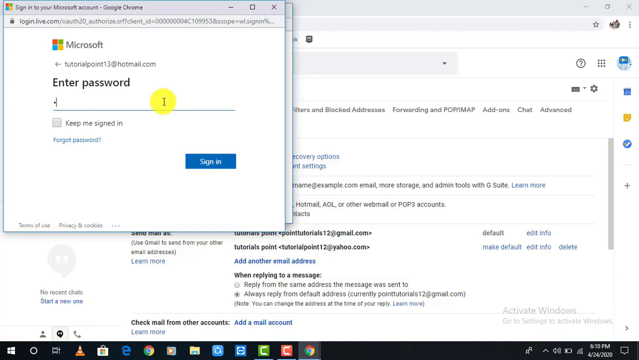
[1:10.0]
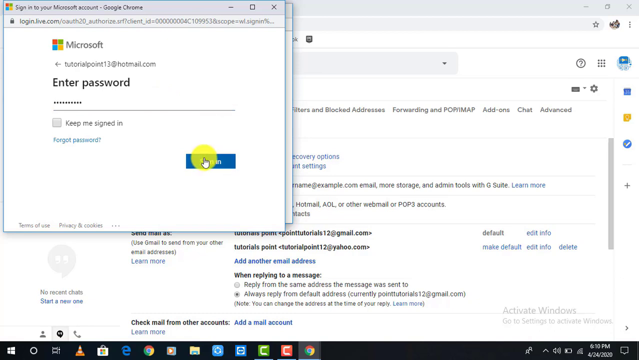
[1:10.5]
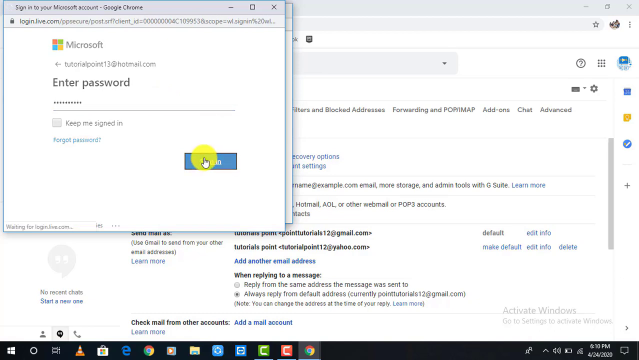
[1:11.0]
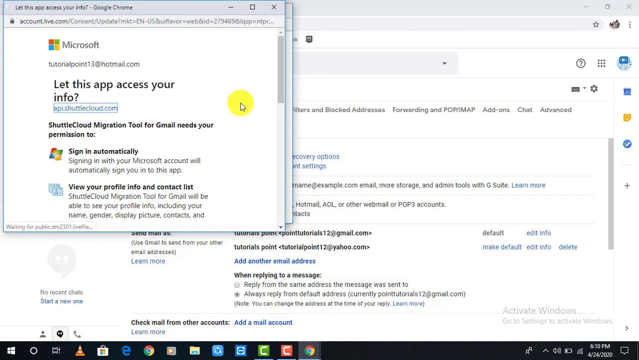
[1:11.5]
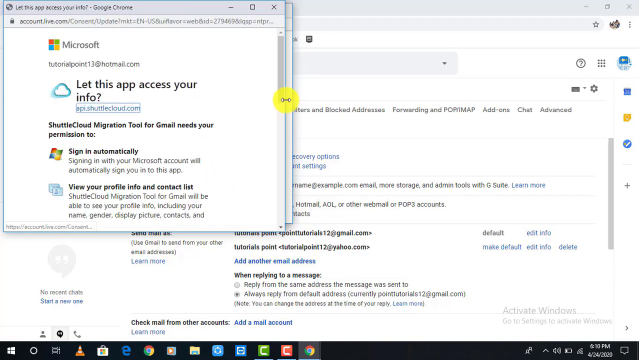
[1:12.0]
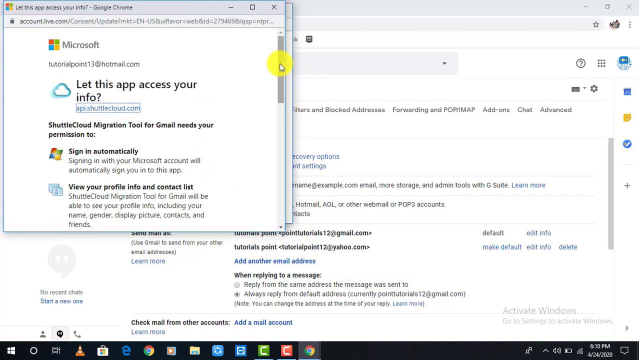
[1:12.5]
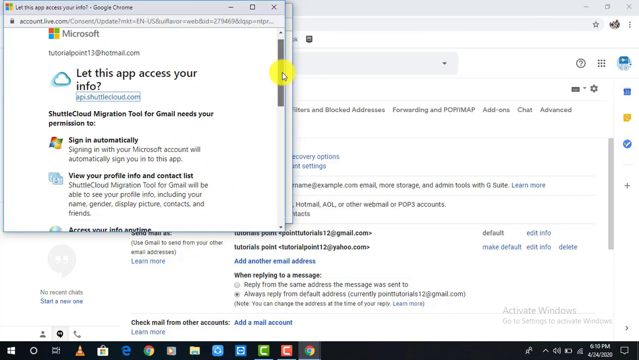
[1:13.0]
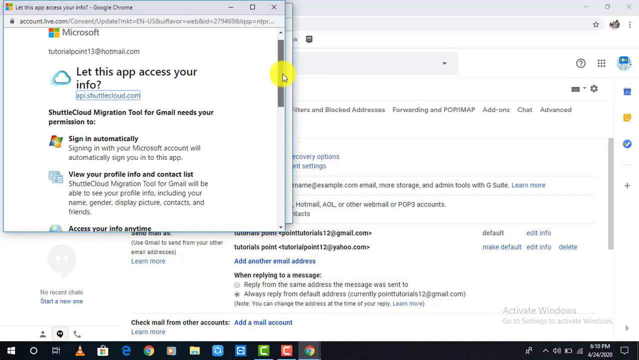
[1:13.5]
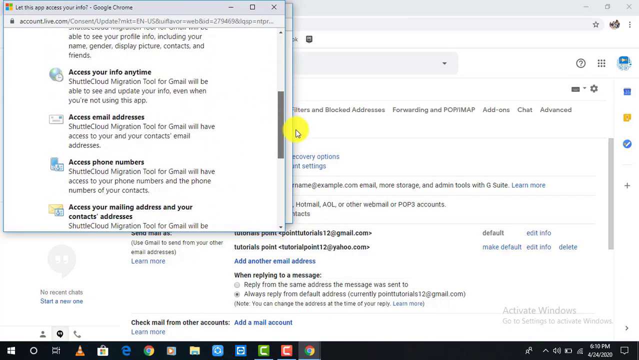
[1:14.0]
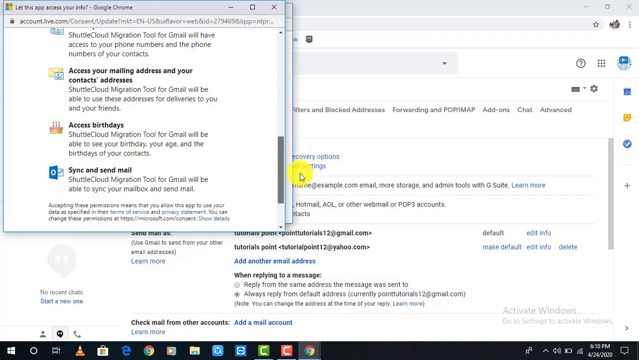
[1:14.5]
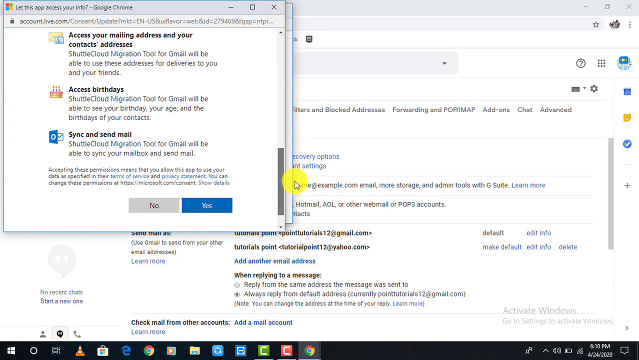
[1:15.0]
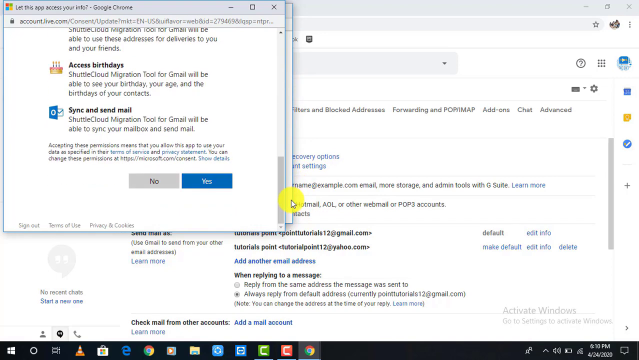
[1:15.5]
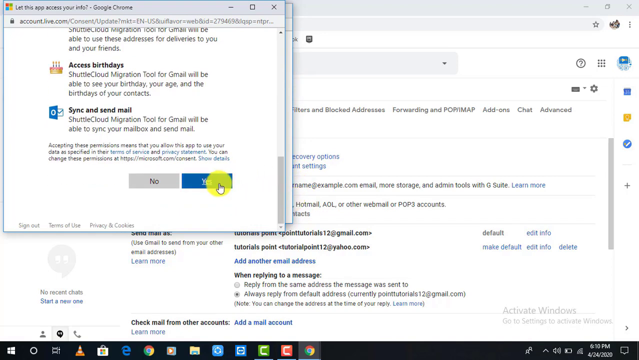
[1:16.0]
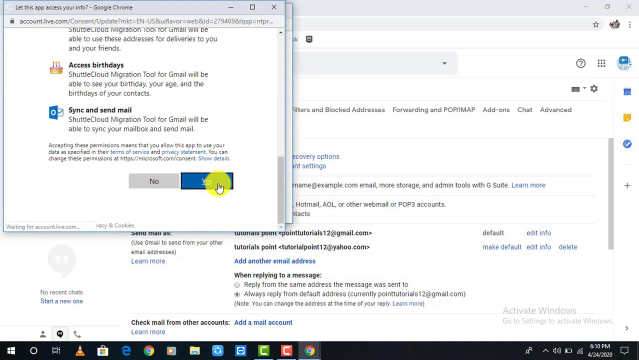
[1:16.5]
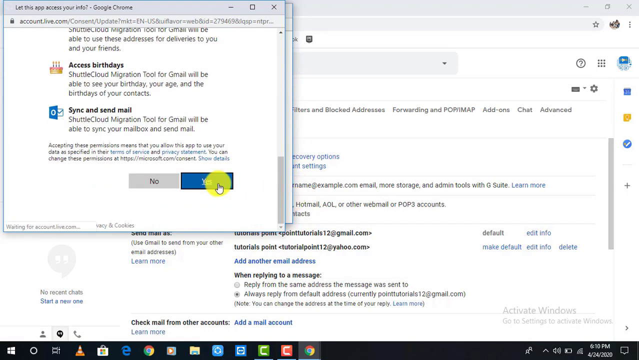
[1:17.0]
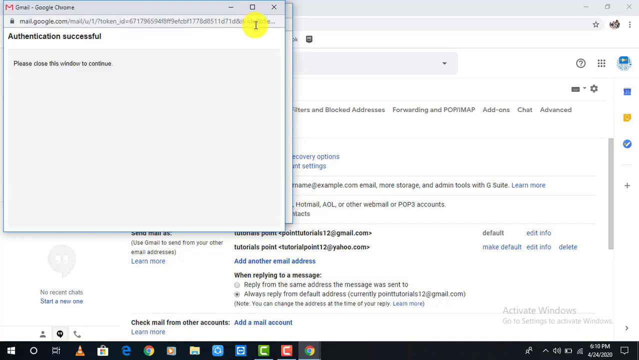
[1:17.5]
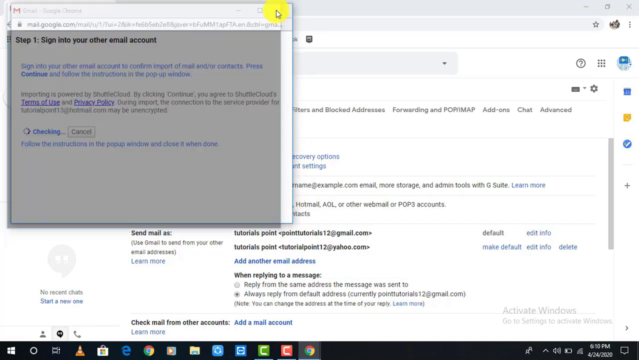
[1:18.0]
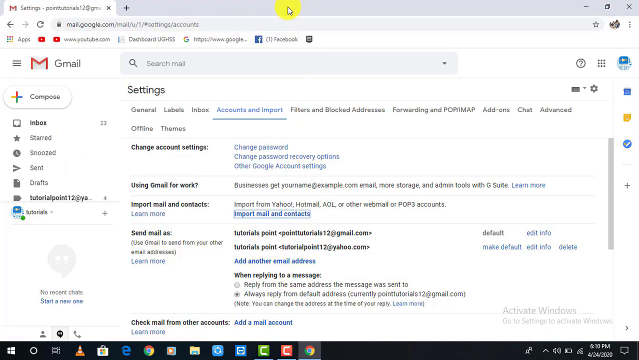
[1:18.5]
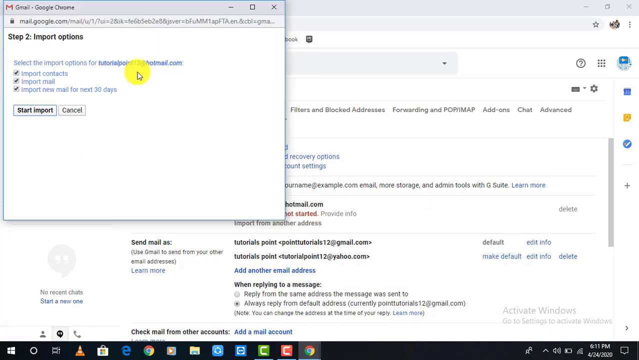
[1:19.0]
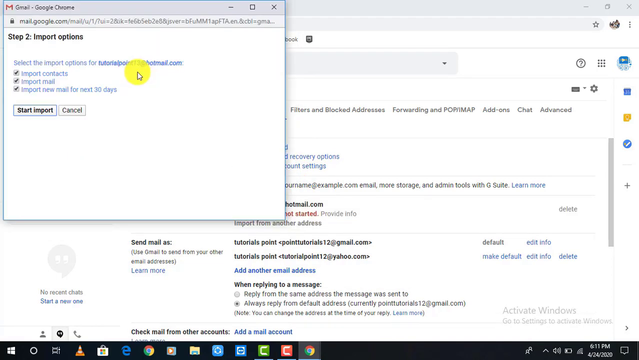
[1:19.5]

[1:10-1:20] The password has just been entered on the Microsoft pop-up and shows only as black circles. The user clicks a blue next button, and a different Microsoft pop-up appears with the email tutorial.13 at hotmail.com at the top. There is a cloud and the text "let this app access your info," followed by "shuttle cloud migration tool for Gmail needs your permission to sign in automatically, view your profile info and contact list." A small bar indicates more information to be shown; the user clicks it and scrolls to the bottom, where the list continues with items such as sync and send email, access birthdays, and access your mailing address and your contact address. Yes and no buttons are at the bottom, and the user clicks yes. Something then appears, and the user clicks X to exit the pop-up.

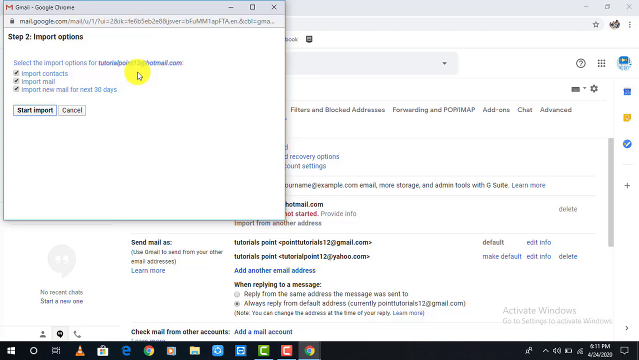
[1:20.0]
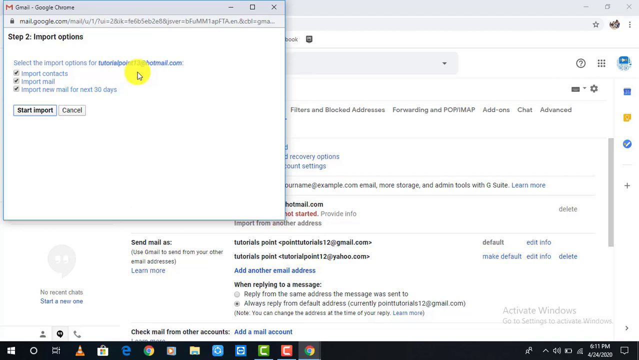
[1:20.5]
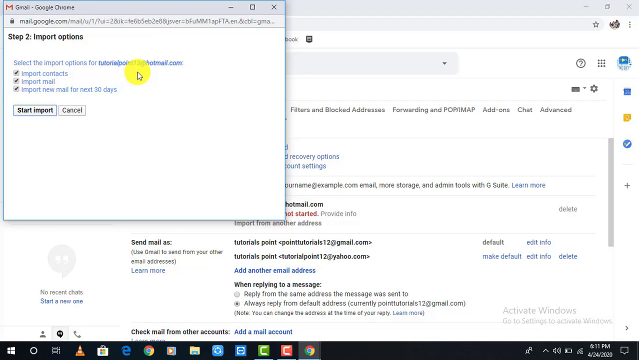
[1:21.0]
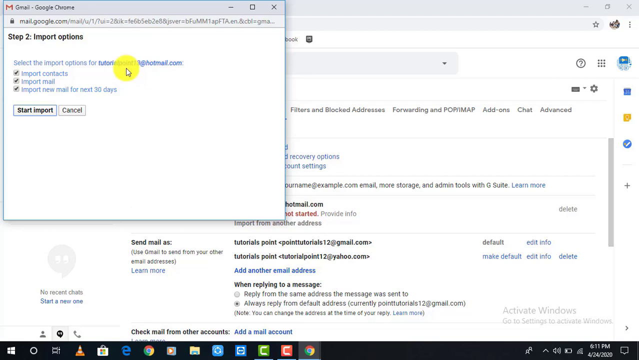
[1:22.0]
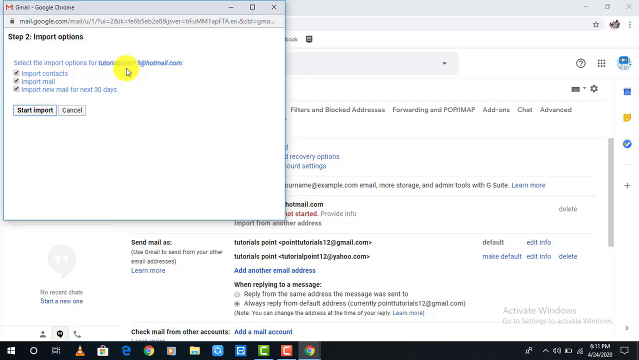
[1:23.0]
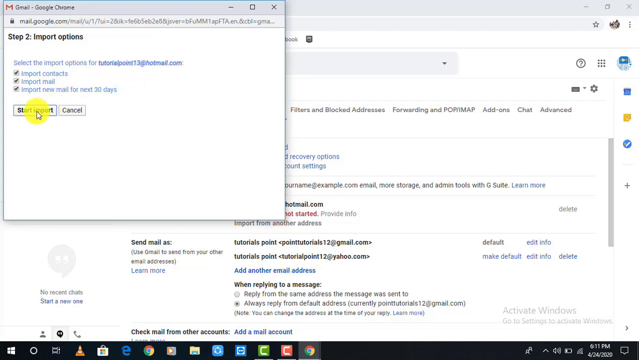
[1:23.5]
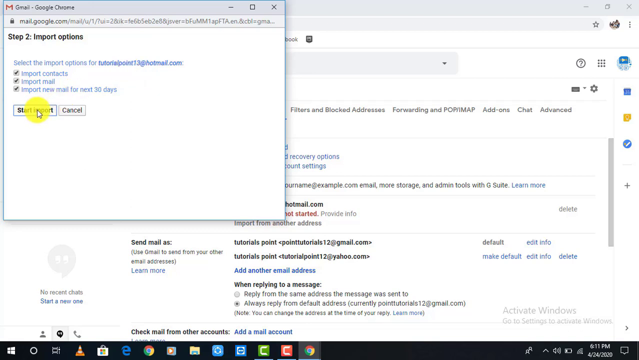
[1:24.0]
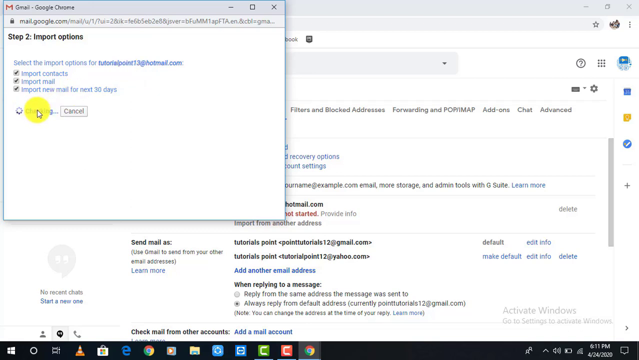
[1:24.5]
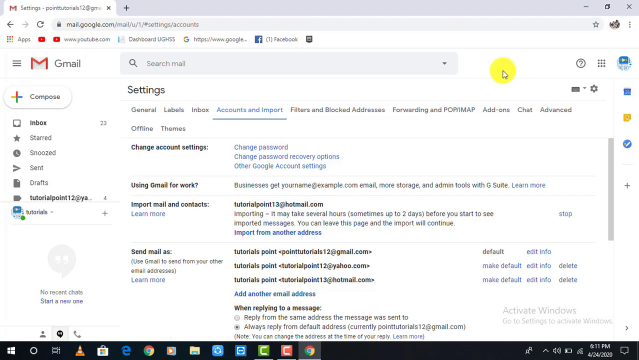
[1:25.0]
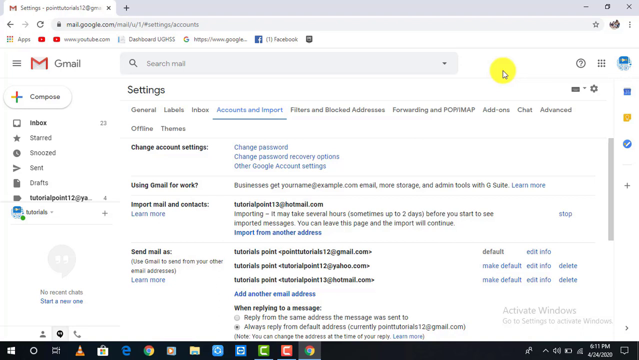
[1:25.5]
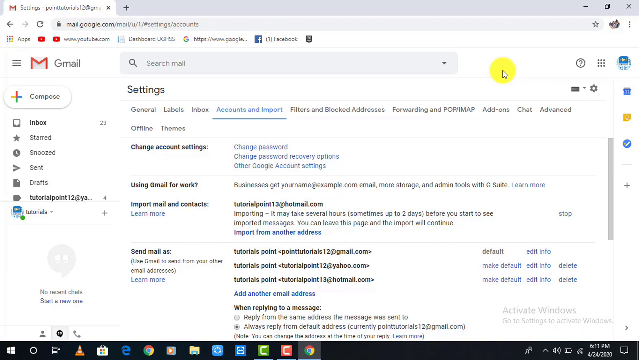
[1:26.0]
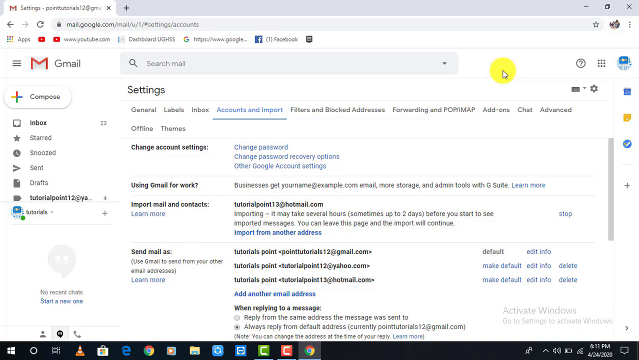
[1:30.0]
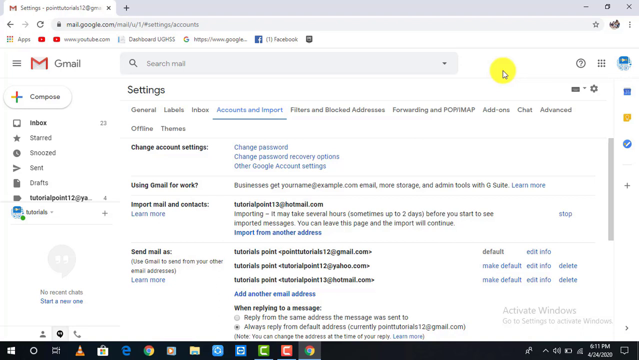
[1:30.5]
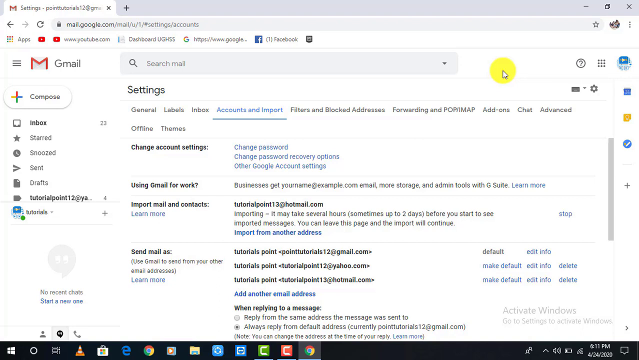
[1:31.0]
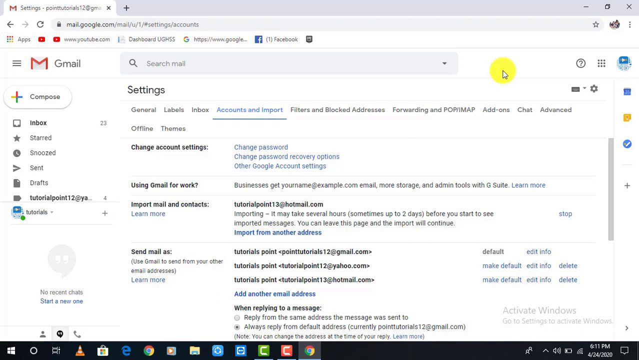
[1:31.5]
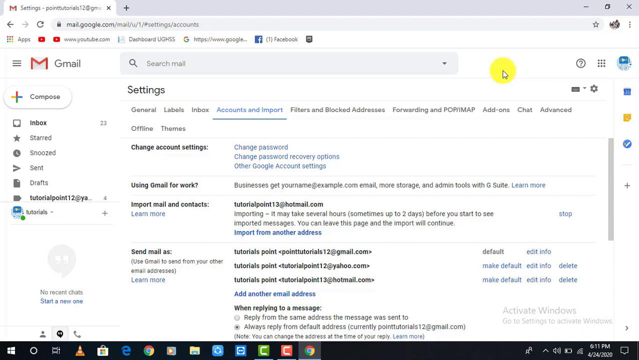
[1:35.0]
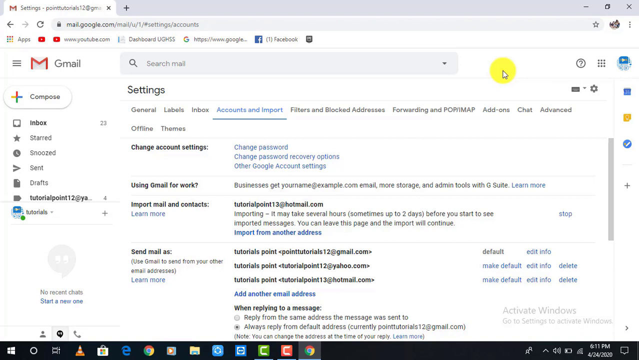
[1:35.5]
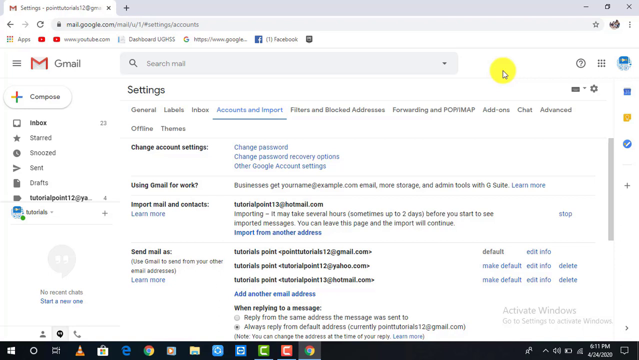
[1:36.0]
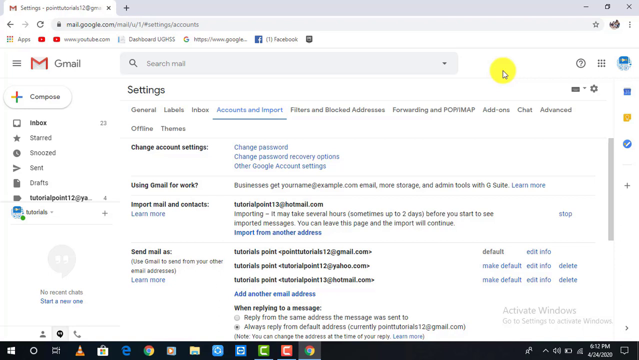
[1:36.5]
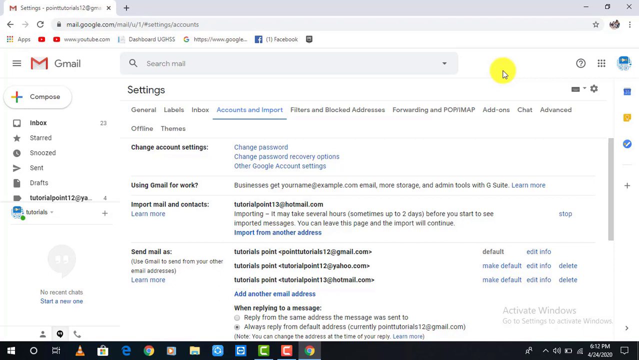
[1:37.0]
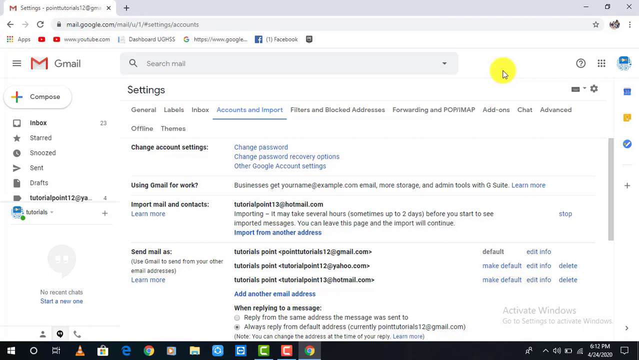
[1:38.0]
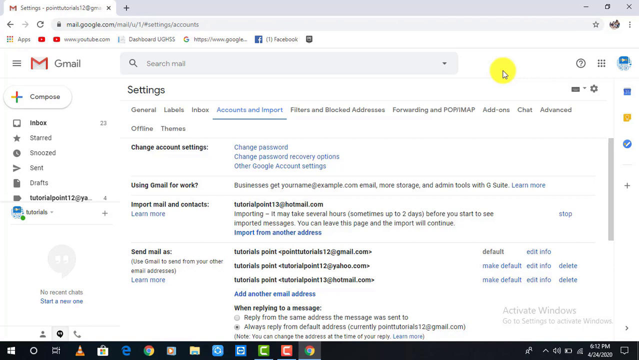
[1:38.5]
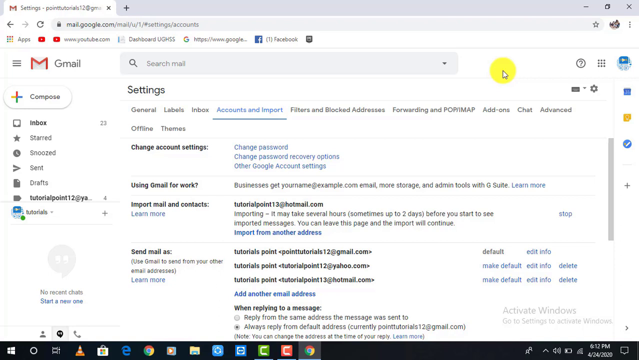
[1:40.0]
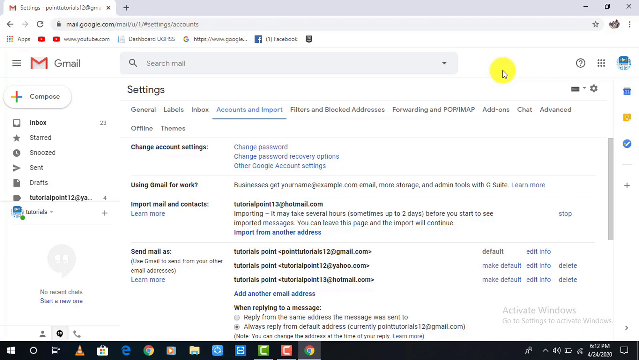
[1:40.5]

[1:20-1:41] Another pop-up from Gmail reads "step two, import options" in blue text, followed by "select the import options for the tutorial email." Three boxes are all checked: "import contacts," "import mail," and "import new mail for next 30 days." Below are options to start import or cancel, and the user clicks Start Import. All the pop-ups disappear, and the Gmail Settings page returns, still on the Accounts and Imports tab. The user does nothing on this tab; the circle with the mouse pointer in it is just hanging up by the search bar. The page now says "importing mail and contacts," with the tutorial account shown, and then "importing. It may take several hours, sometimes up to two days, before you start to see imported messages. You can leave this page and the import will continue." There is a blue option to stop.